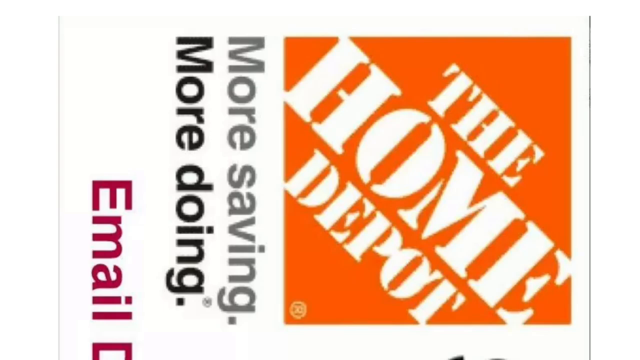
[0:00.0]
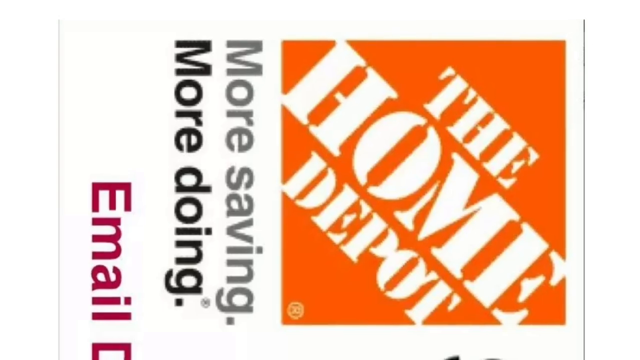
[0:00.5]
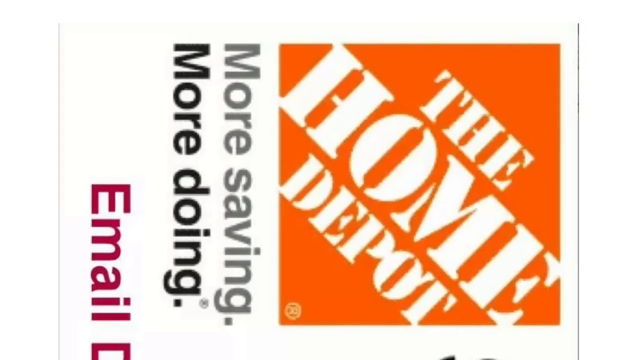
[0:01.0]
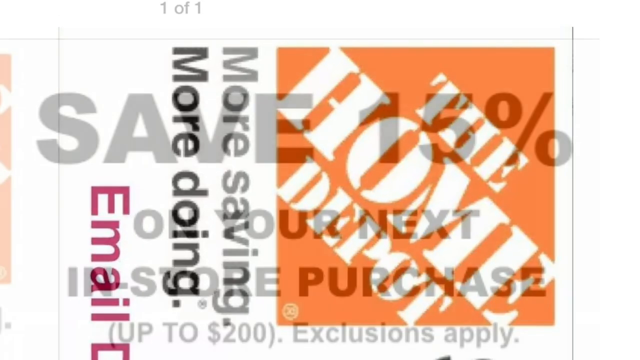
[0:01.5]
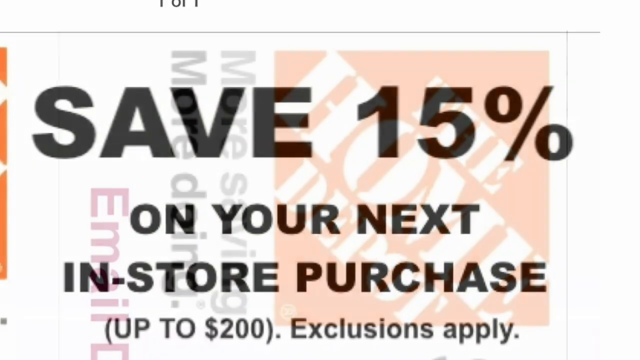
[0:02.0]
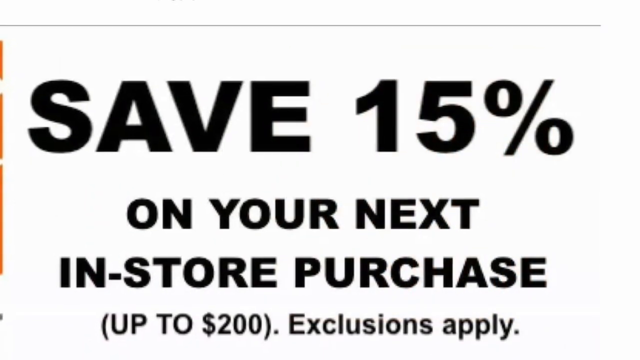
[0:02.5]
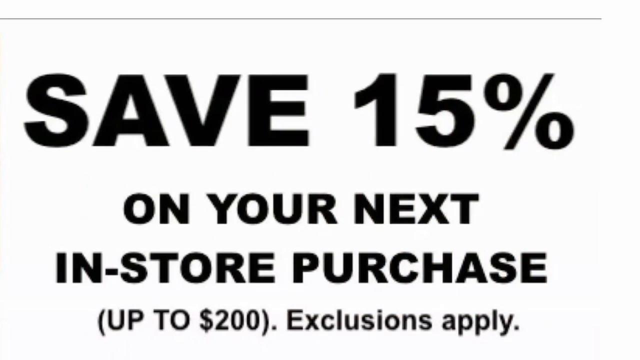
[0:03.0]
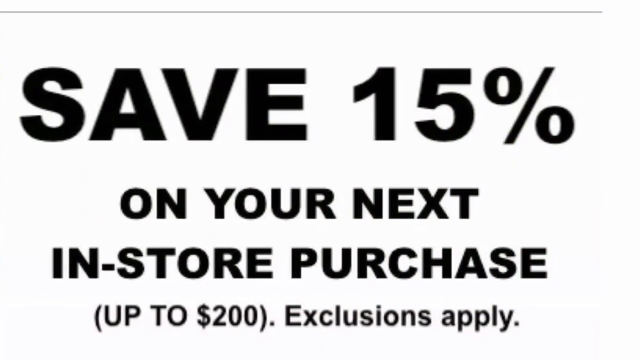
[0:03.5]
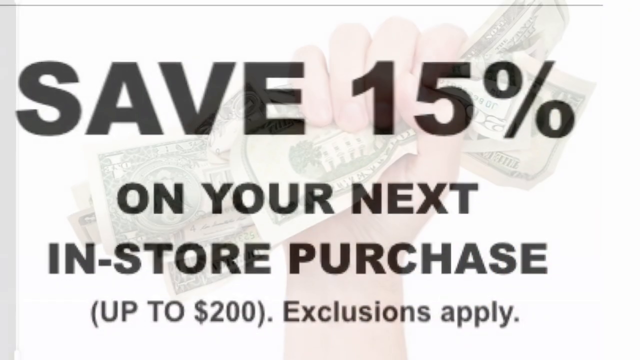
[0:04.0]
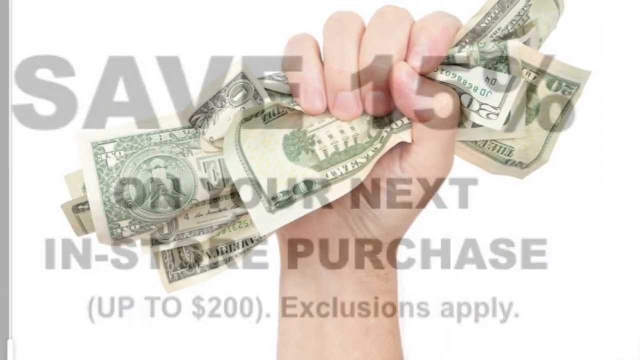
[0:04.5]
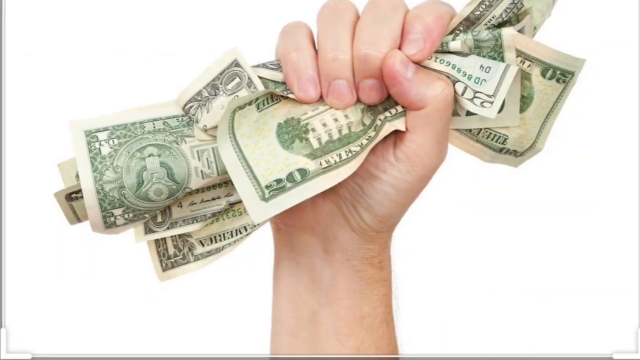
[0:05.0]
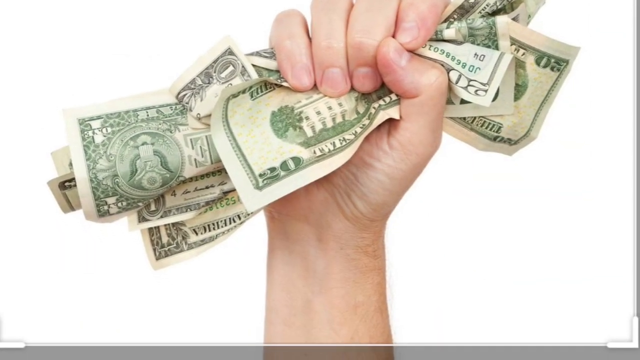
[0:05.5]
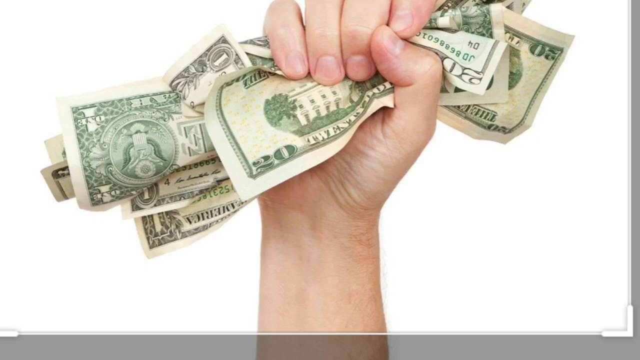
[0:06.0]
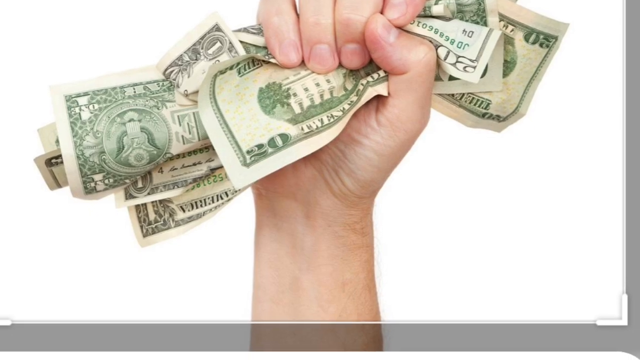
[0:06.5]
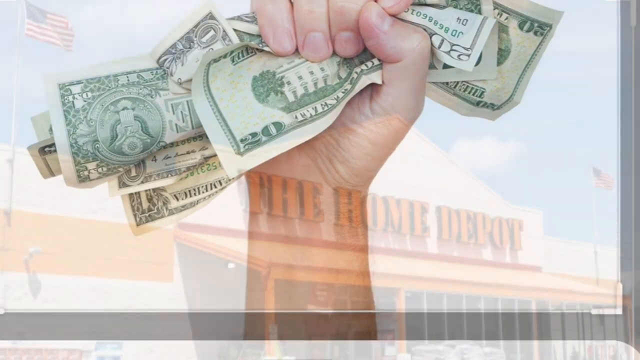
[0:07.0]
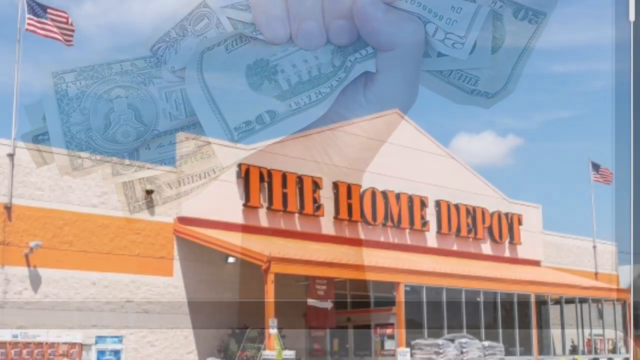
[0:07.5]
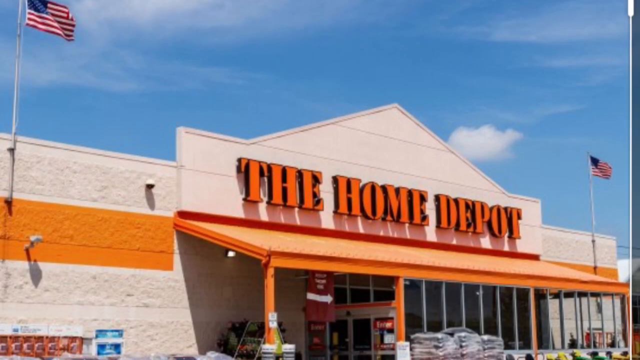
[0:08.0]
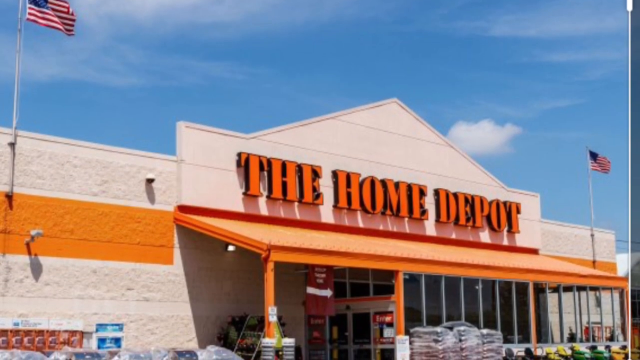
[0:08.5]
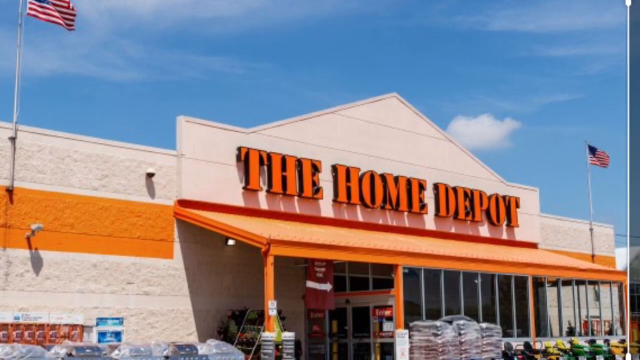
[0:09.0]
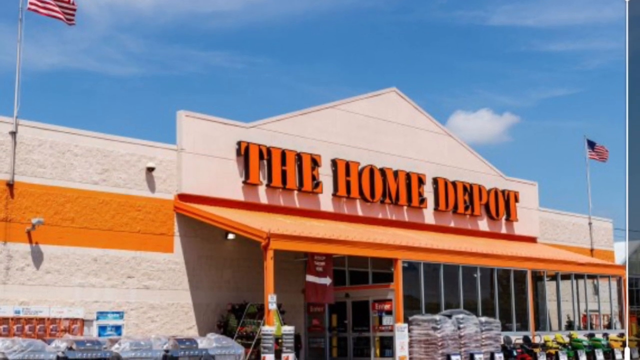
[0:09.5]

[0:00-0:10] The name "the home Depot" appears along with the text "more saving more doing," and text about a purchase up to 200 with "exclusions apply." A hand holds a 20 dollar bill together with other 1 dollar bills and a couple of other 20 dollar bills. A picture of the Home Depot follows. It appears to be some kind of promotional discount for the Home Depot, possibly aimed at new customers. The view is very narrow and does not show a larger picture.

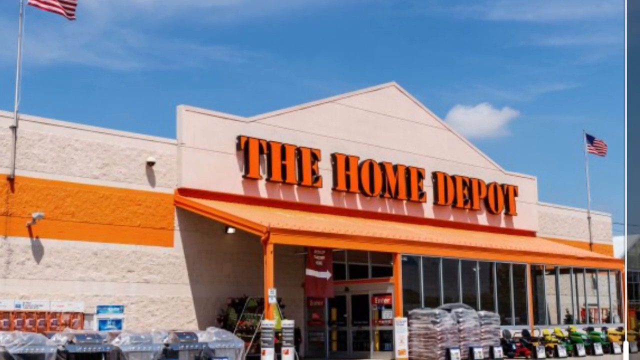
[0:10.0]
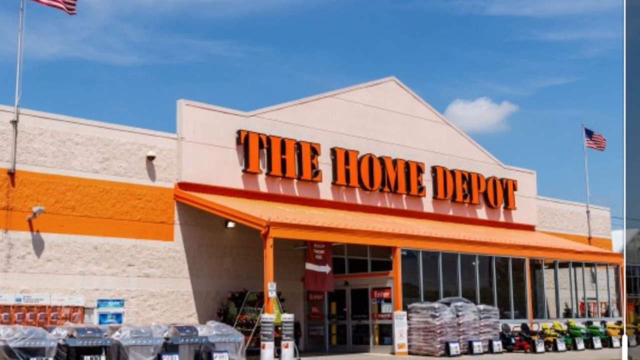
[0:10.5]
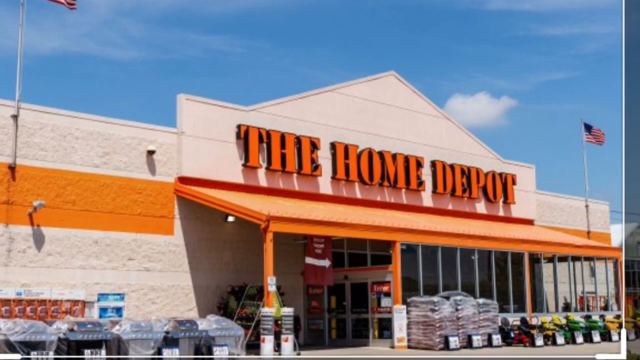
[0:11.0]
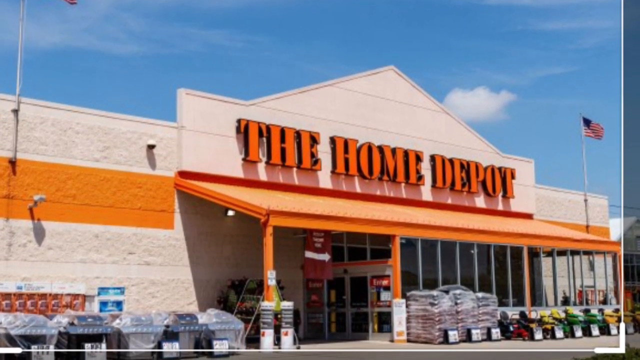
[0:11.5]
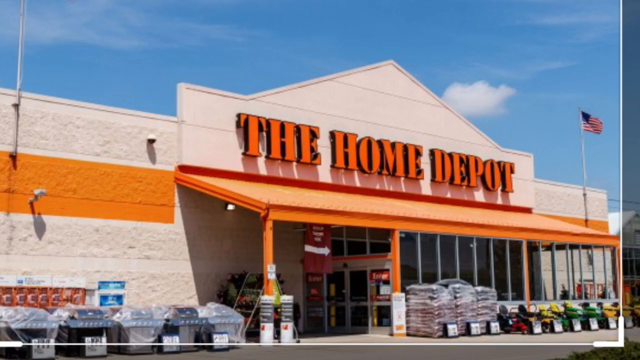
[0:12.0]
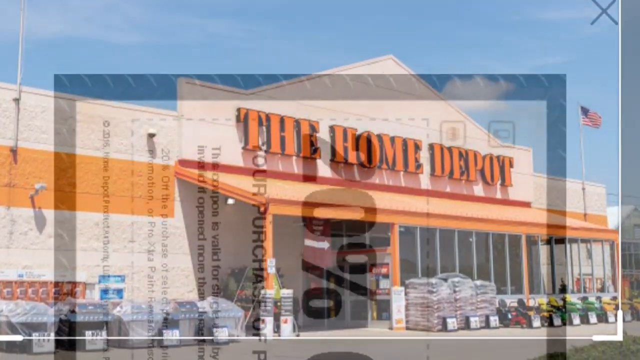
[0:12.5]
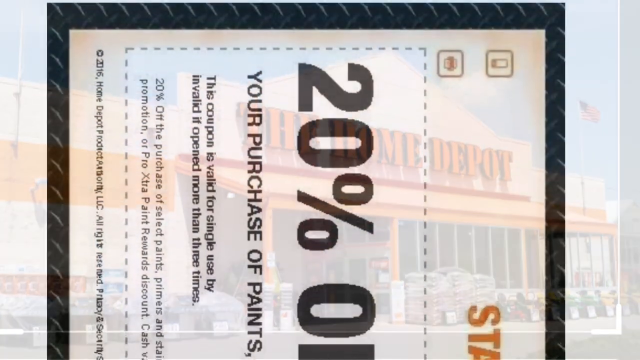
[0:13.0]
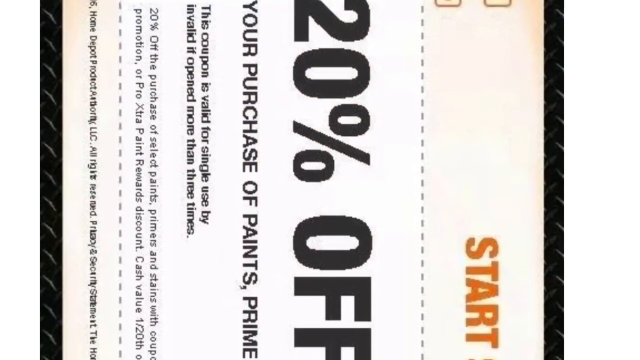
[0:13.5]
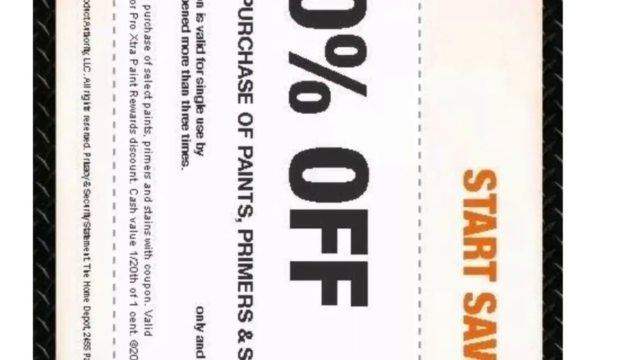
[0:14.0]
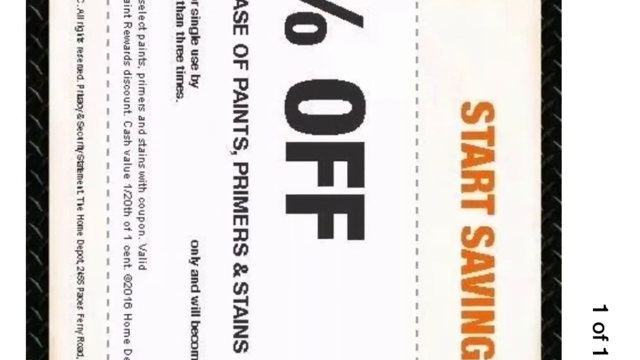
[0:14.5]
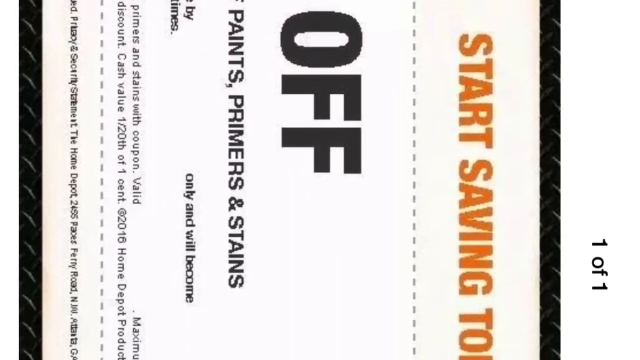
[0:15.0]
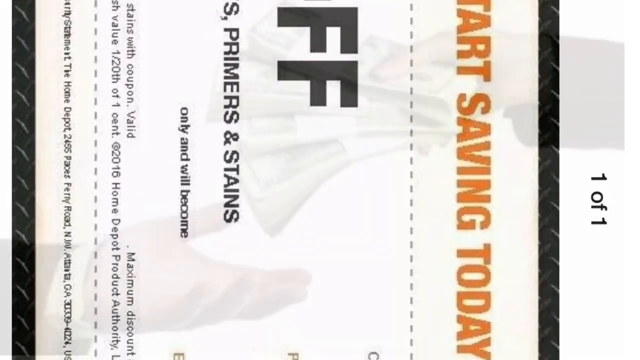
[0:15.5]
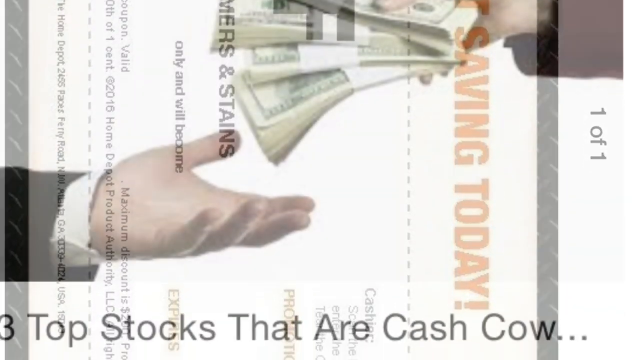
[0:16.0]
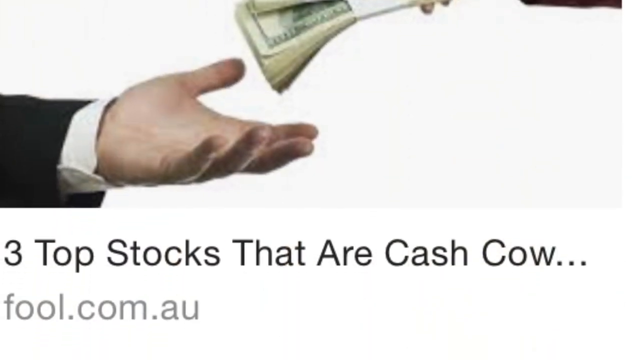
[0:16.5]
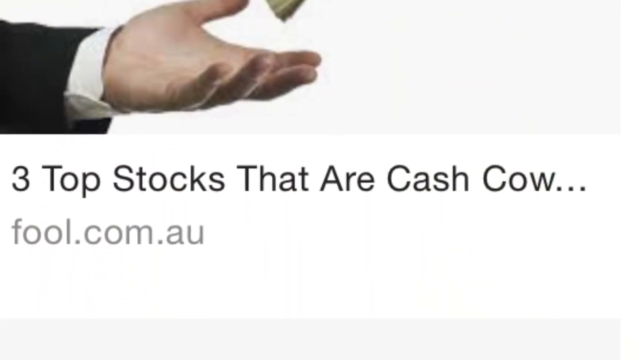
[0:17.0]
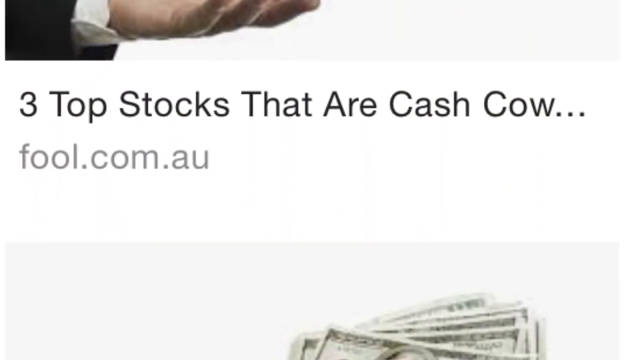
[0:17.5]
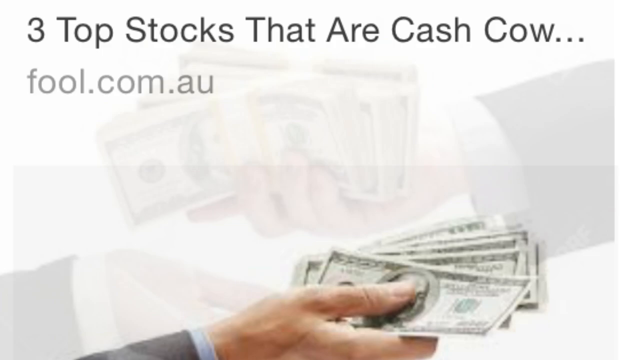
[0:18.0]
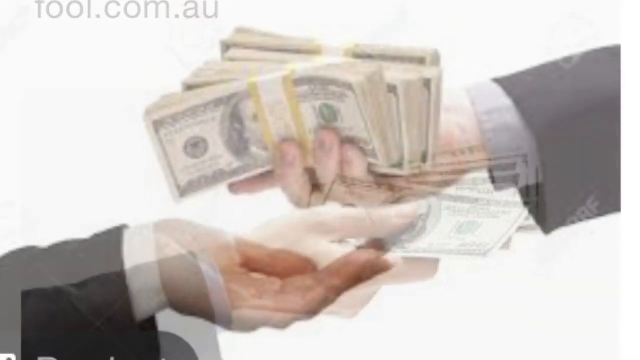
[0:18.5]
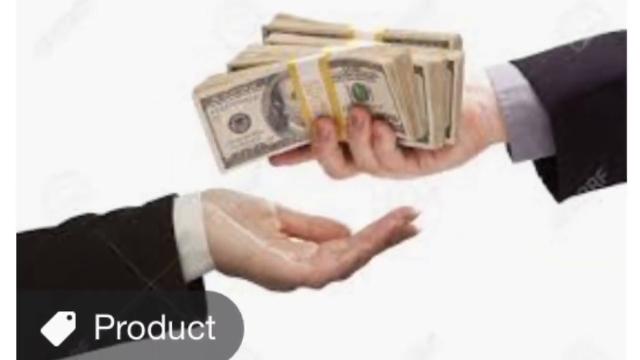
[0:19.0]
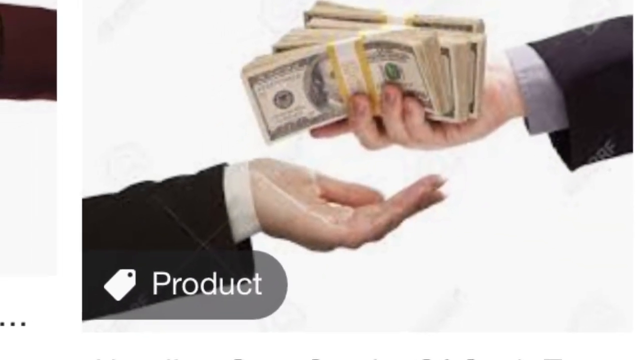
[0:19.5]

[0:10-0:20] A picture of the Home Depot appears, now with a 20% off savings offer and the text "your purchase of paints, primers, and stains." The video then switches to something completely different: text about "the three top stocks that are cash cow" with the website "fool.com.au." Stacks of cash are handed over. Next eBay appears, followed by a Home Depot coupon. It plays as a kind of promotional slideshow of discounts with no clear narrative.